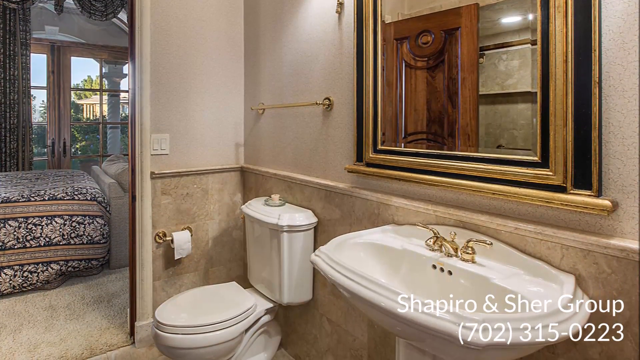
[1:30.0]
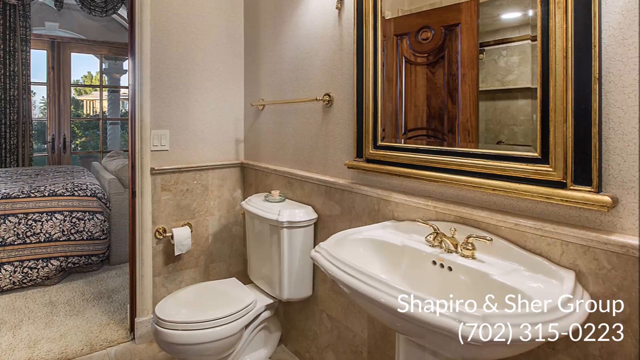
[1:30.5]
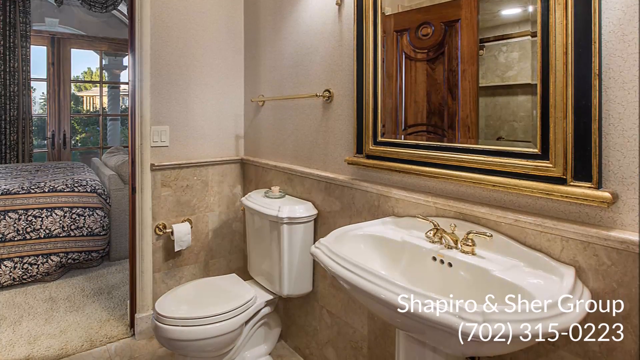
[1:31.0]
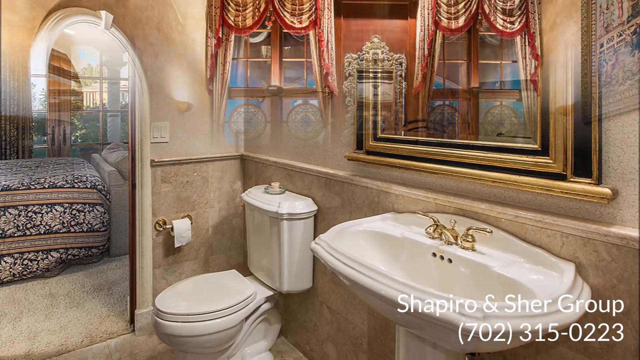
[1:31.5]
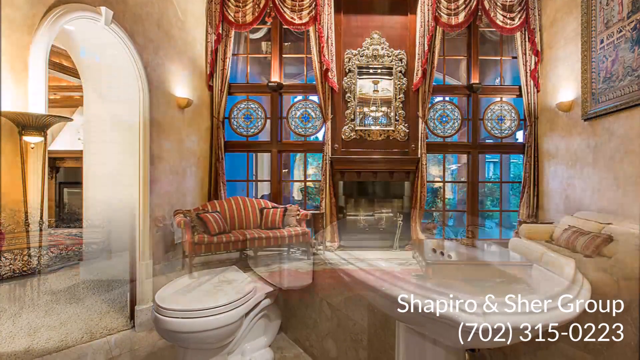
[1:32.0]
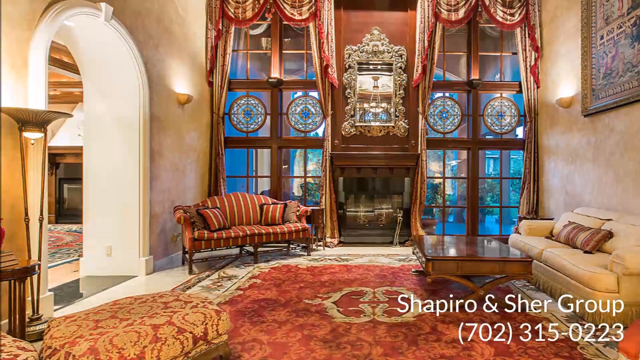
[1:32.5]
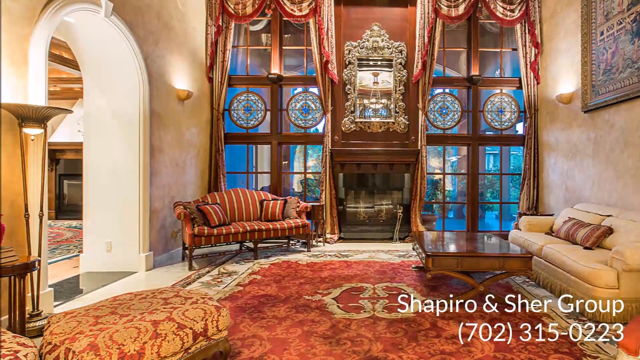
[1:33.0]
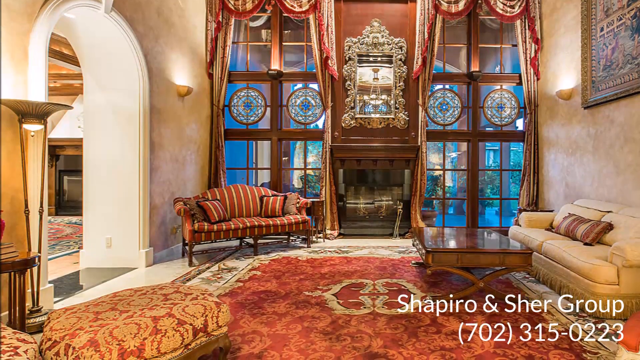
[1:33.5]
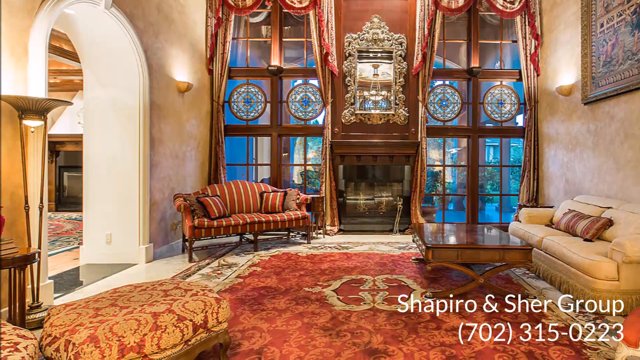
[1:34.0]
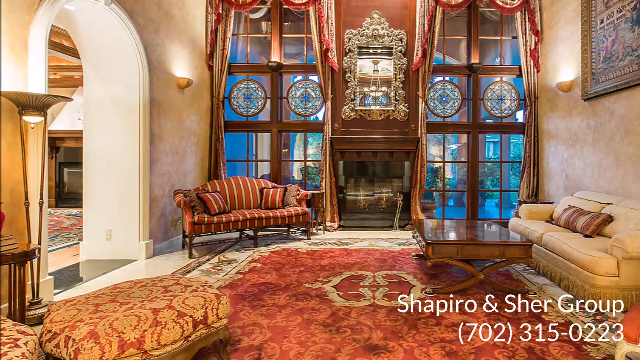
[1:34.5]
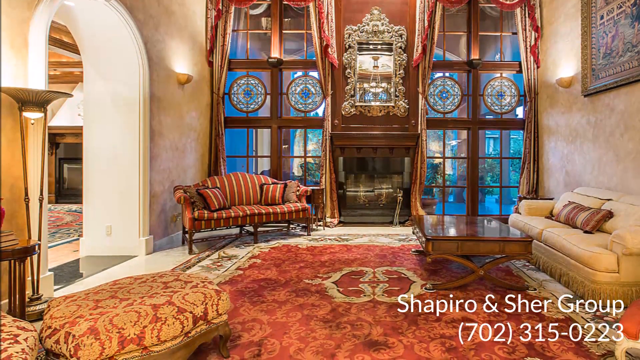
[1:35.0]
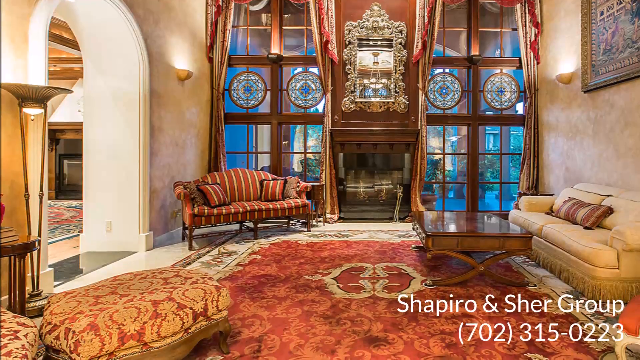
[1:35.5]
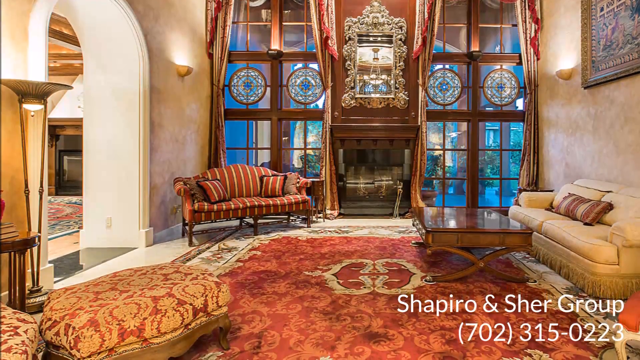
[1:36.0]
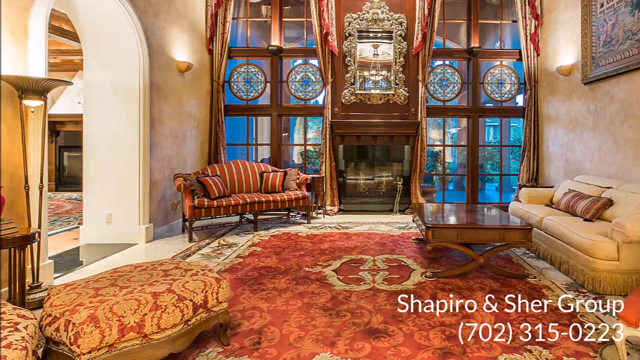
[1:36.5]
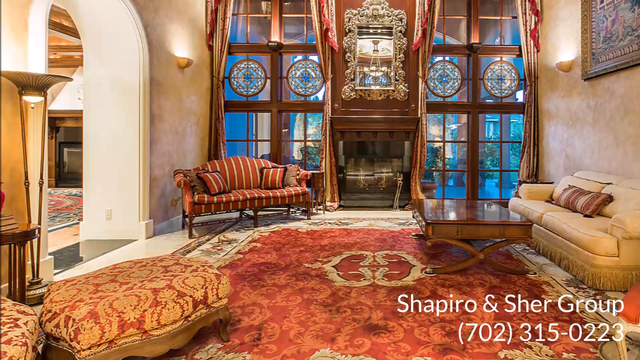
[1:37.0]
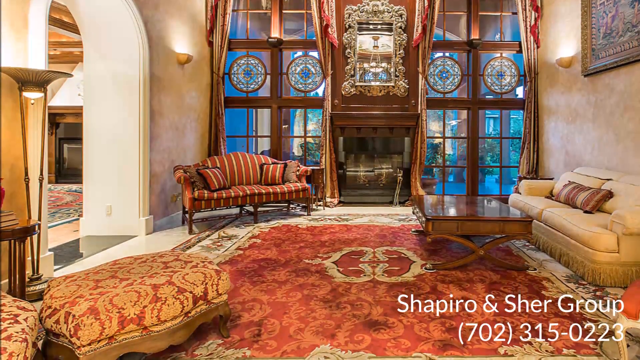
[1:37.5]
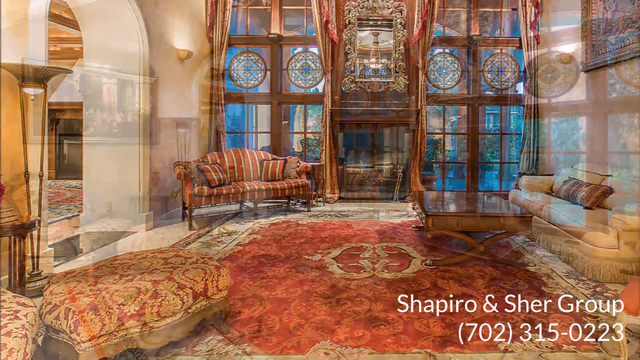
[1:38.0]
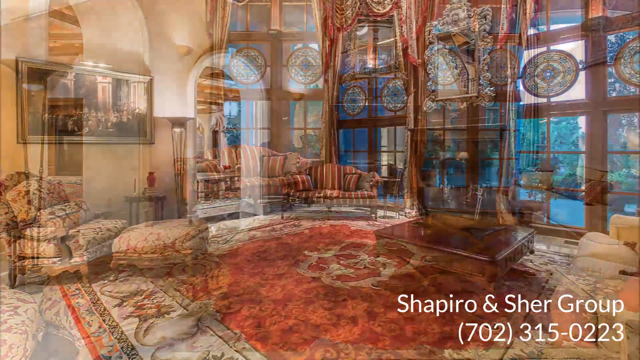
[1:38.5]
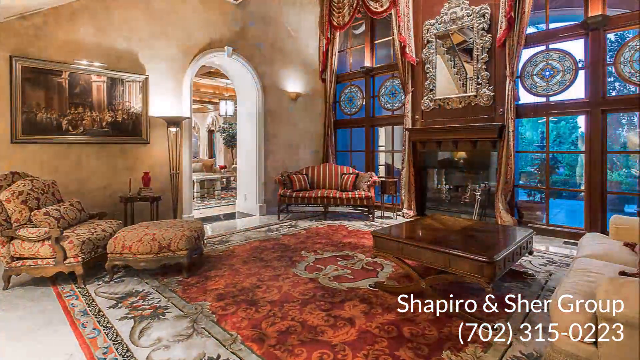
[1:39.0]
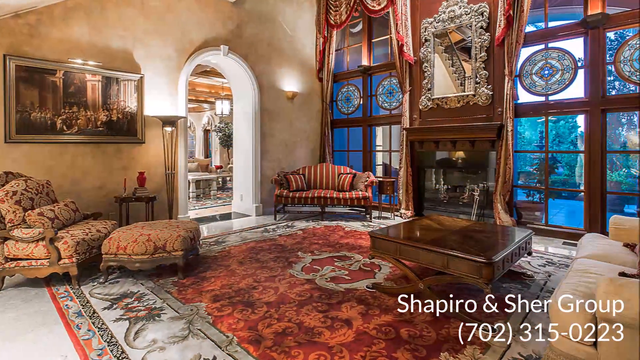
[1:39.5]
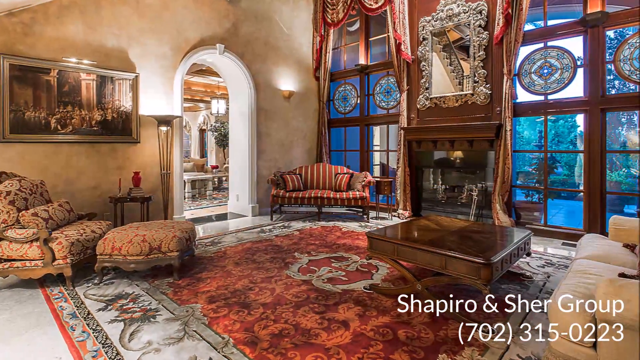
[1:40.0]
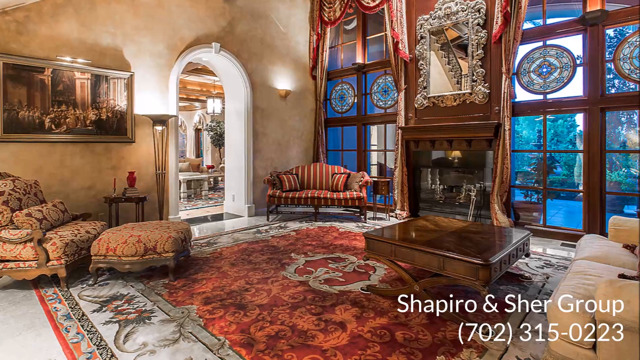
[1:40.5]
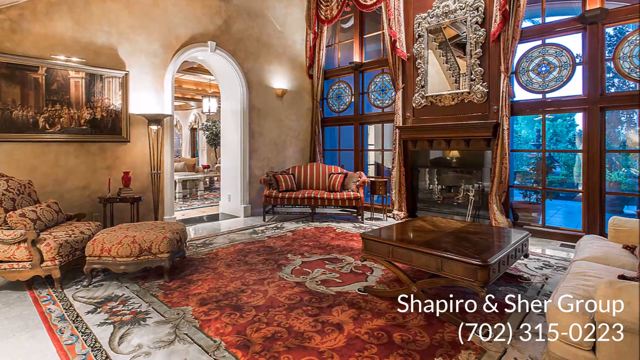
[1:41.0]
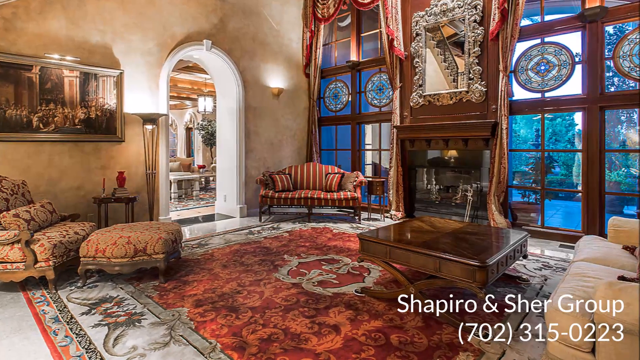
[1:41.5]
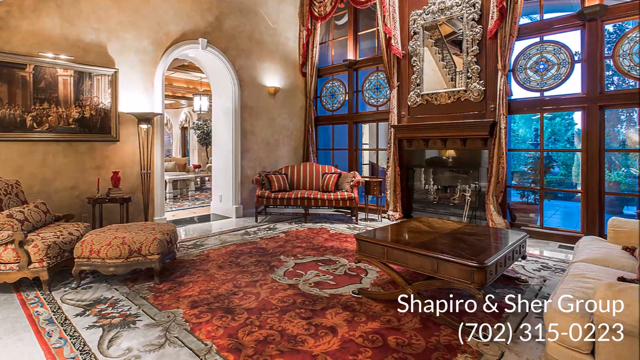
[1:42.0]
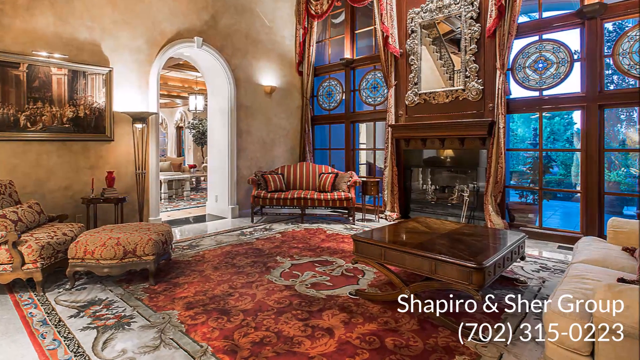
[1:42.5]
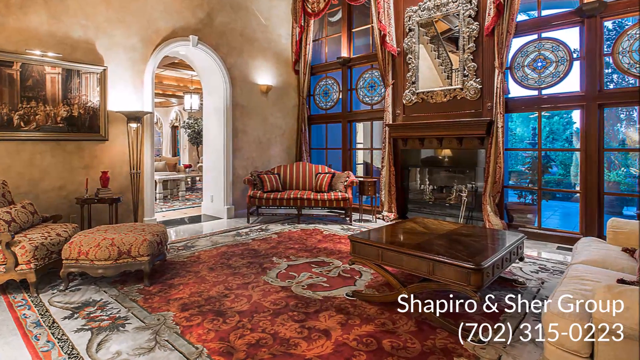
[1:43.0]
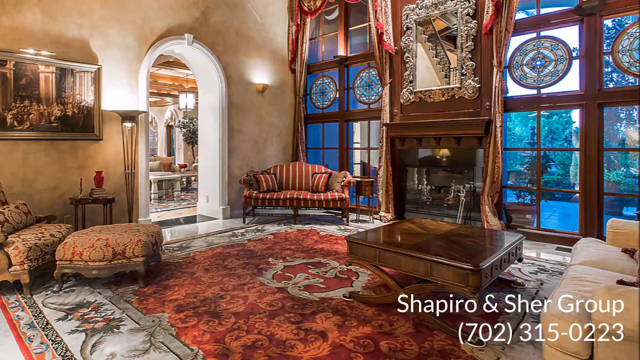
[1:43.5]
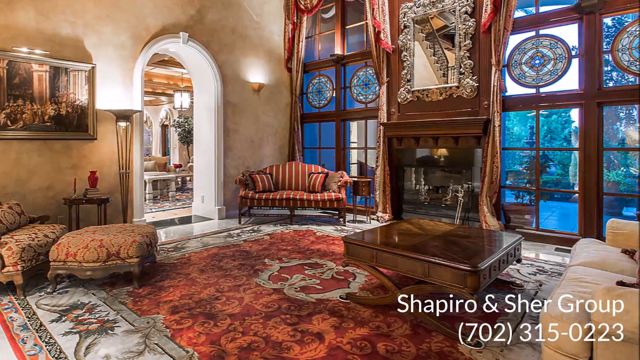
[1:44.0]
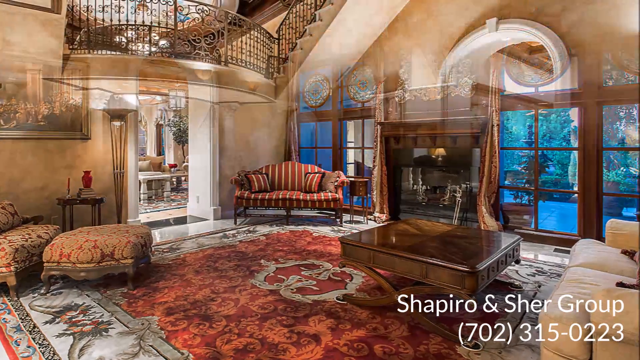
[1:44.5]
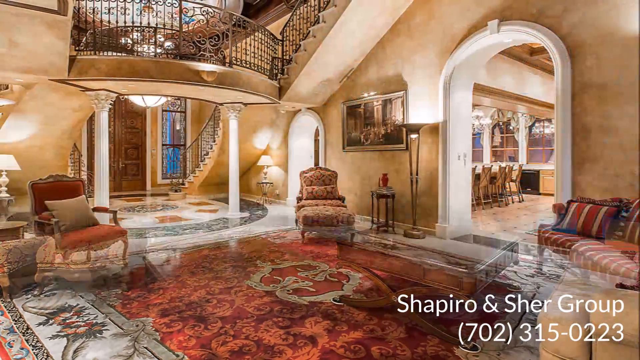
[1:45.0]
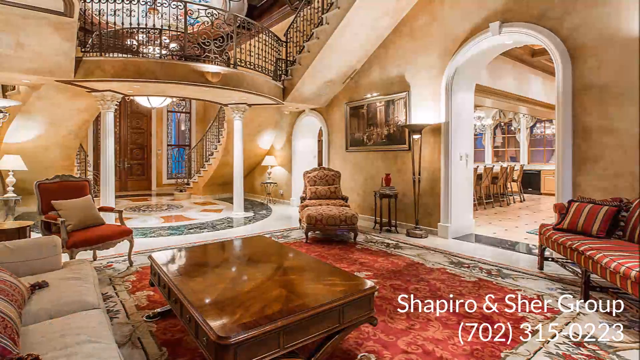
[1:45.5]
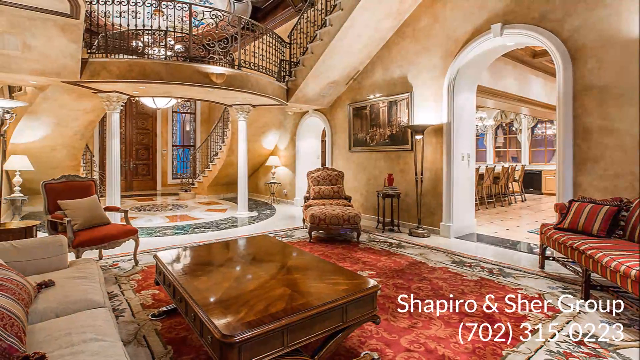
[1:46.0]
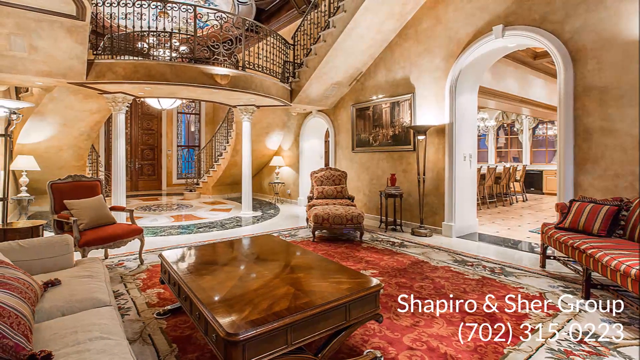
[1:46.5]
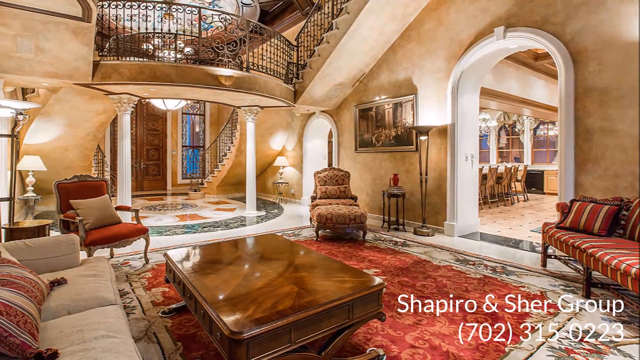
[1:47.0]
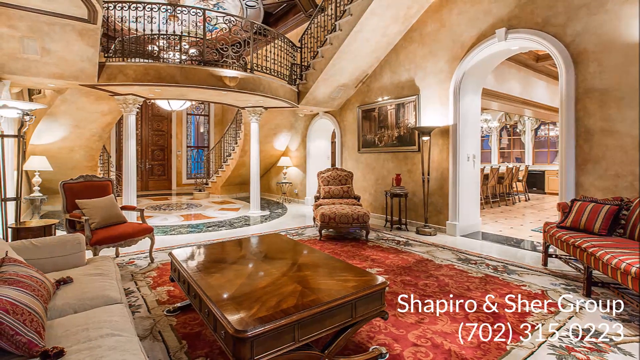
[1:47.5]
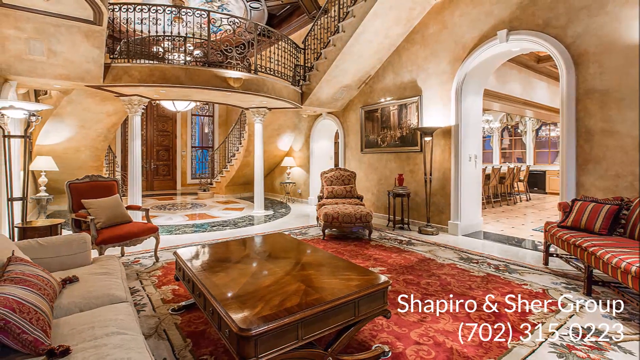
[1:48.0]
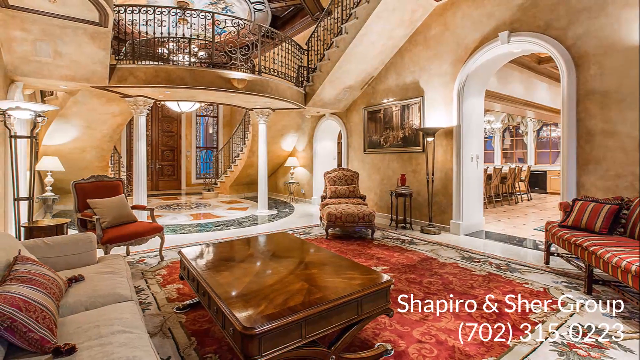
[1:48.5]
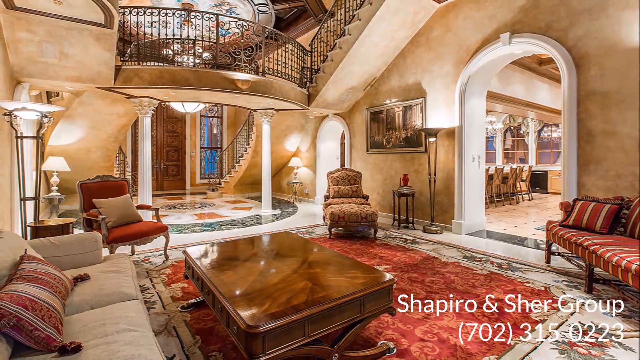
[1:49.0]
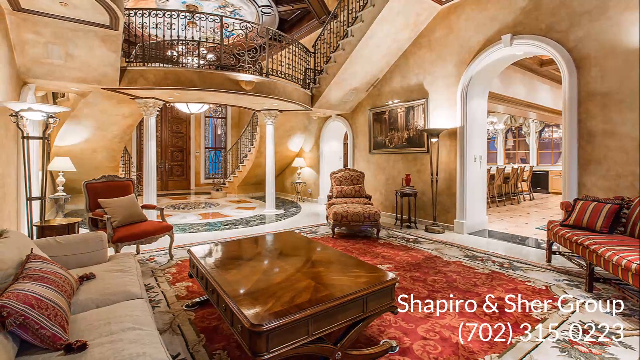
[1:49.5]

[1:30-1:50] A different scene shows a couch on the right side, a coffee table, and a red couch in the corner to the left, with a red and white carpet underneath. In the background, very large windows are visible in the middle, and there appears to be some sort of fireplace. To the right is a hanging picture. The scene changes to the same room from a different angle: to the left is what looks like an ottoman and a single couch or recliner, to the right is a couch, and in the left corner is the red couch. The scene changes to the same room from yet another angle, with the red couch on the right side, a beige couch on the left side, a coffee table in the middle and the rug underneath. To the right is an opening that looks like it leads to the kitchen. Up above to the left is a balcony, and two sets of stairs are visible. Also to the left in the background is a large, very tall wooden door that appears to be the front door.